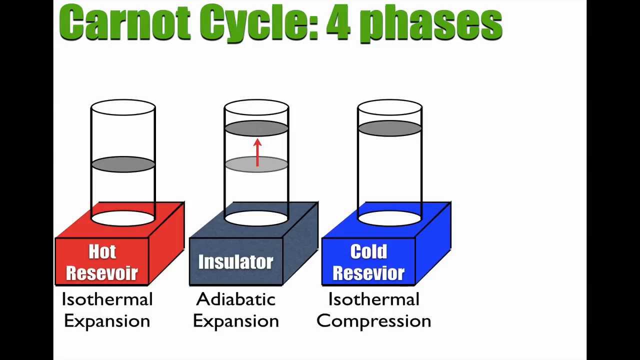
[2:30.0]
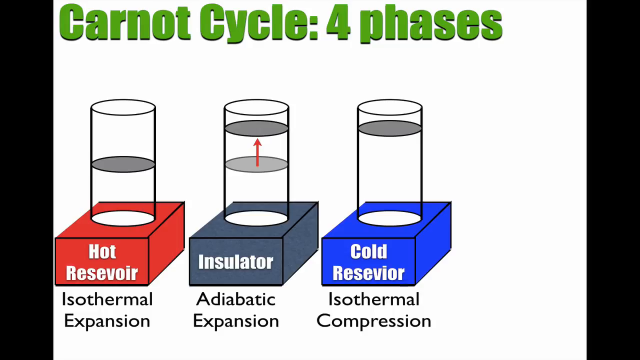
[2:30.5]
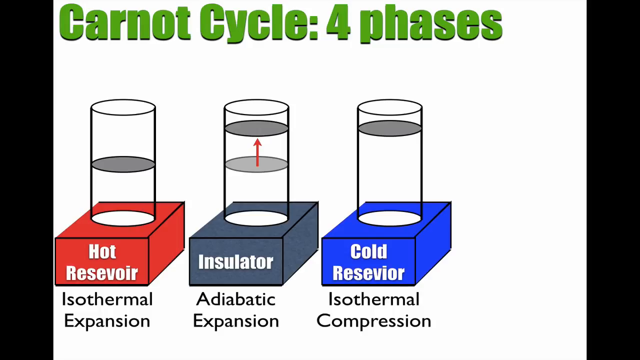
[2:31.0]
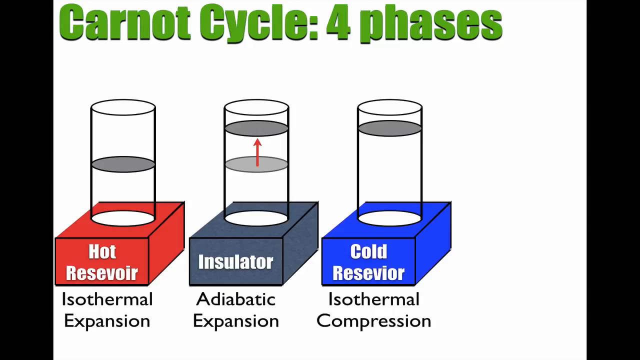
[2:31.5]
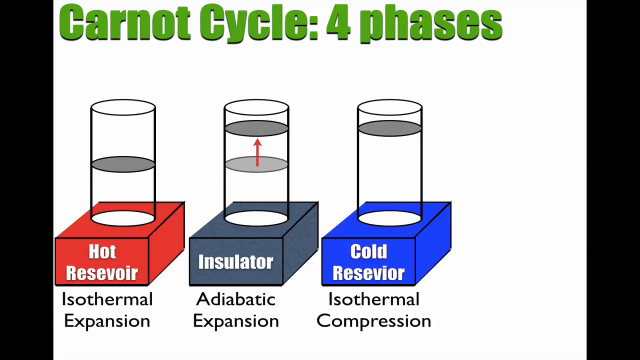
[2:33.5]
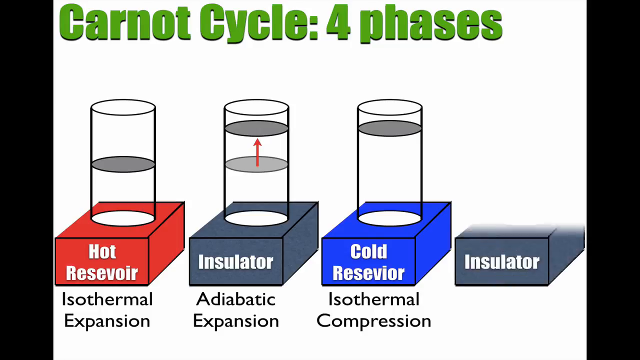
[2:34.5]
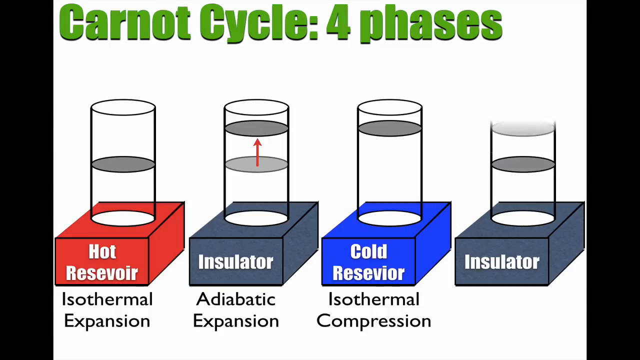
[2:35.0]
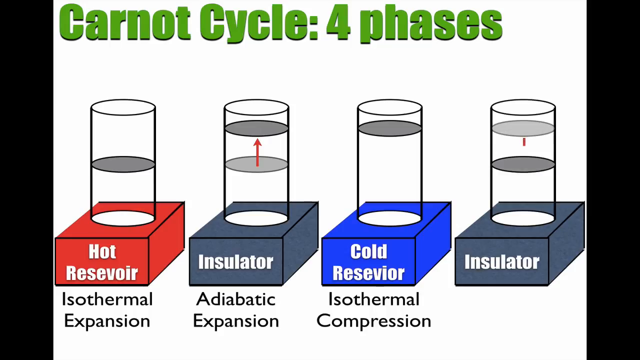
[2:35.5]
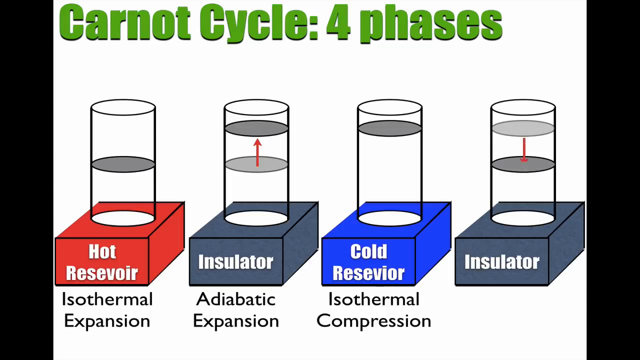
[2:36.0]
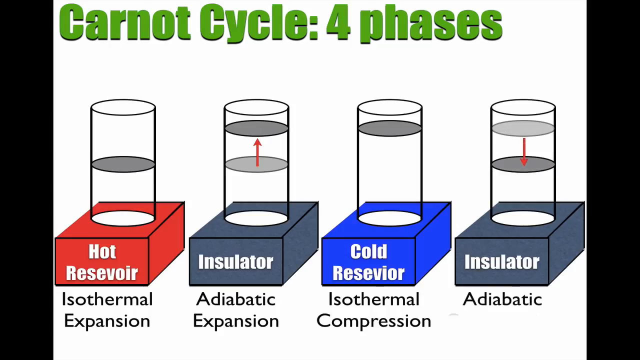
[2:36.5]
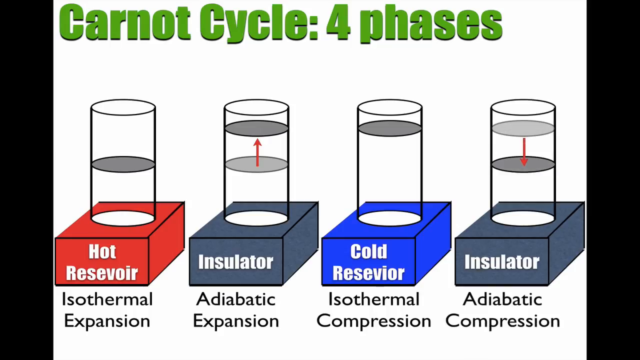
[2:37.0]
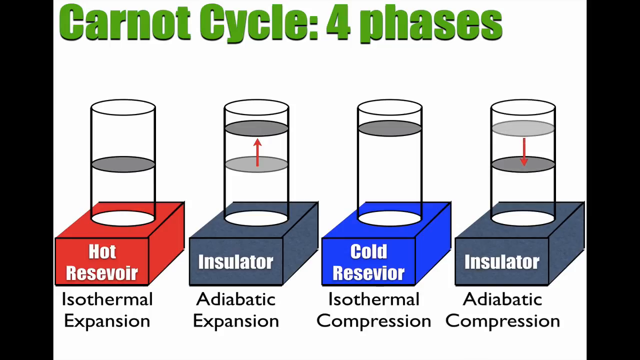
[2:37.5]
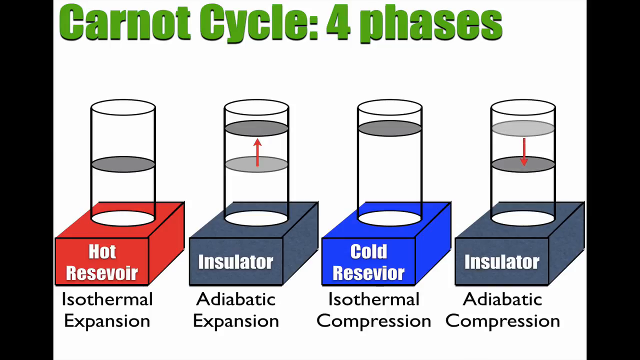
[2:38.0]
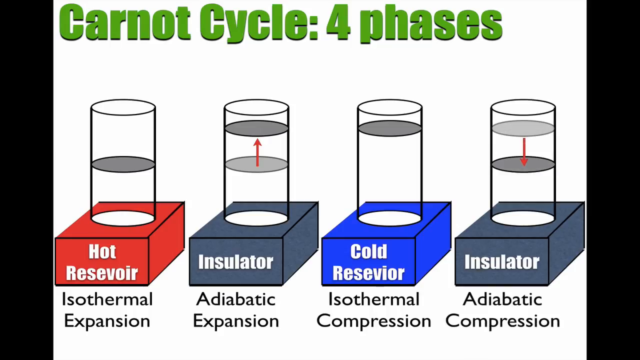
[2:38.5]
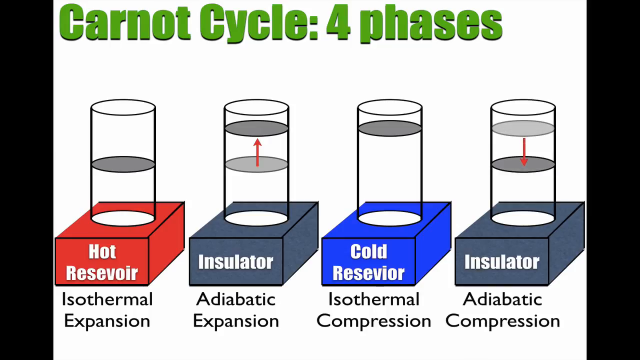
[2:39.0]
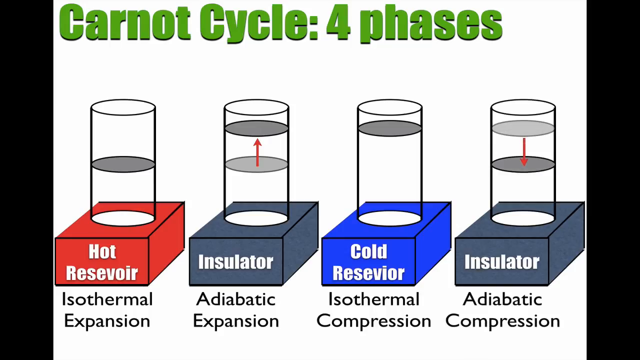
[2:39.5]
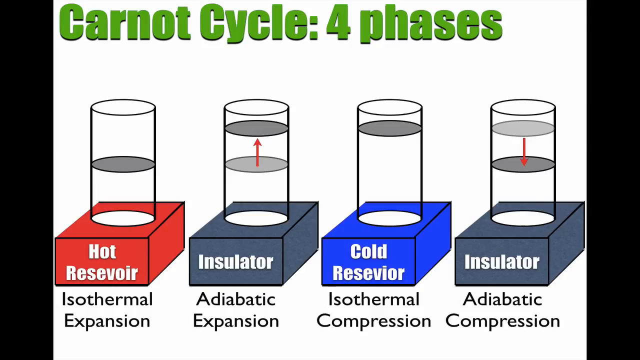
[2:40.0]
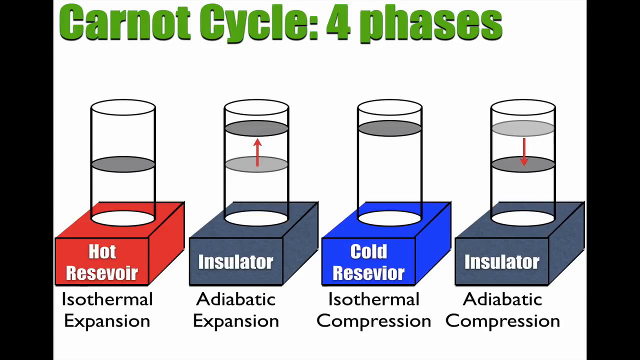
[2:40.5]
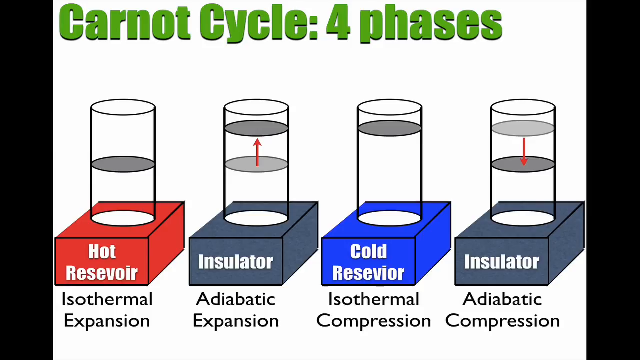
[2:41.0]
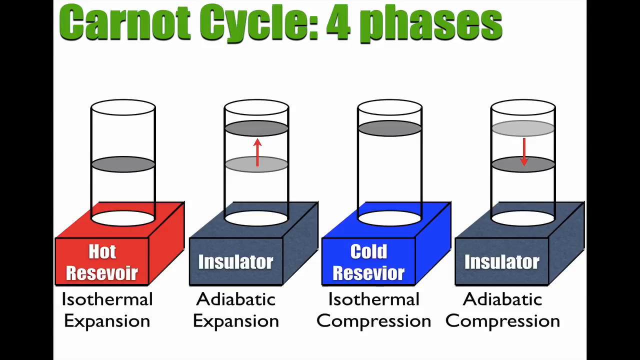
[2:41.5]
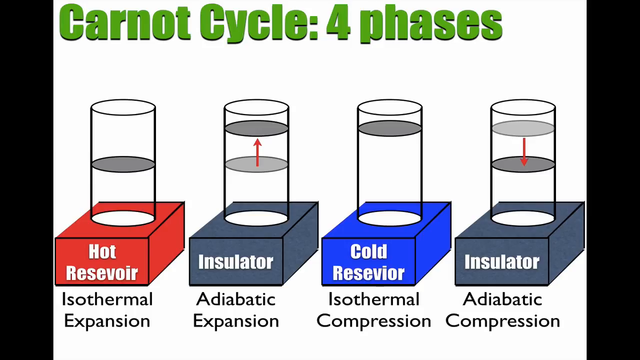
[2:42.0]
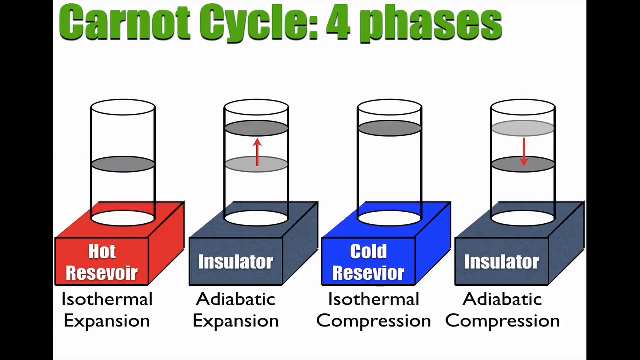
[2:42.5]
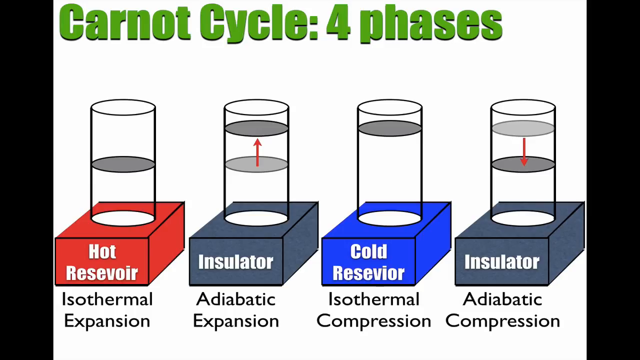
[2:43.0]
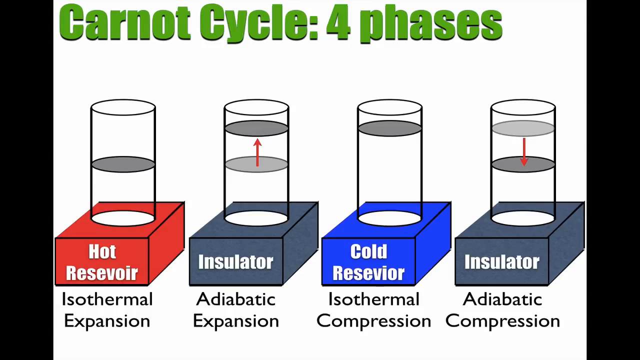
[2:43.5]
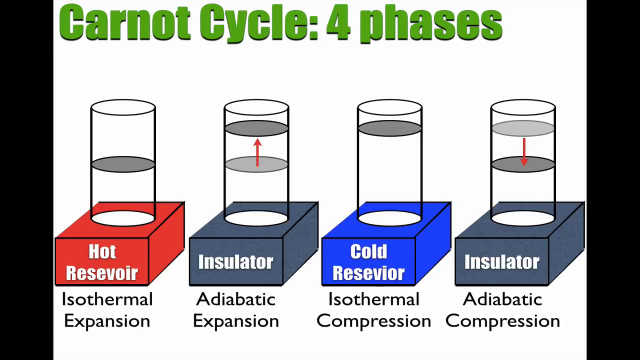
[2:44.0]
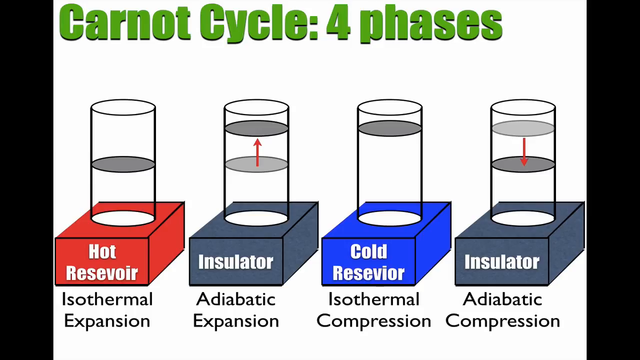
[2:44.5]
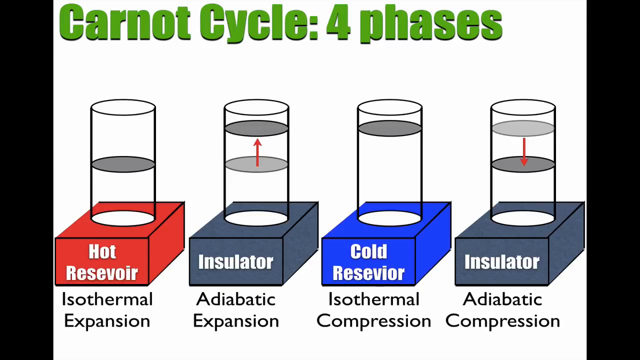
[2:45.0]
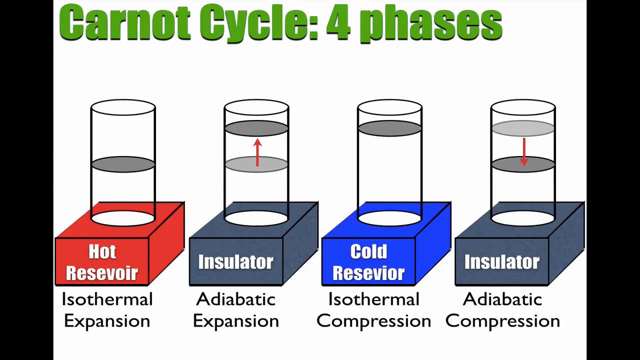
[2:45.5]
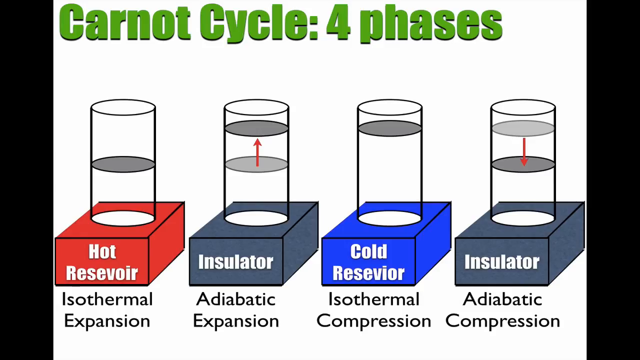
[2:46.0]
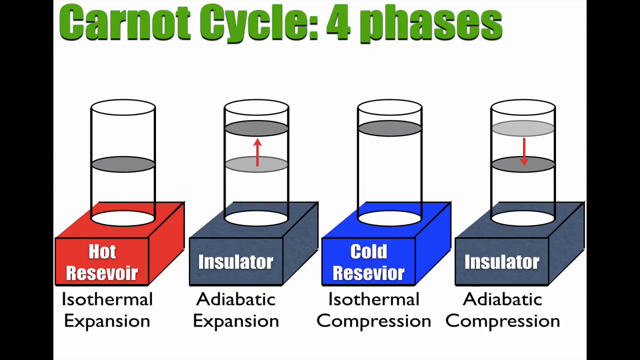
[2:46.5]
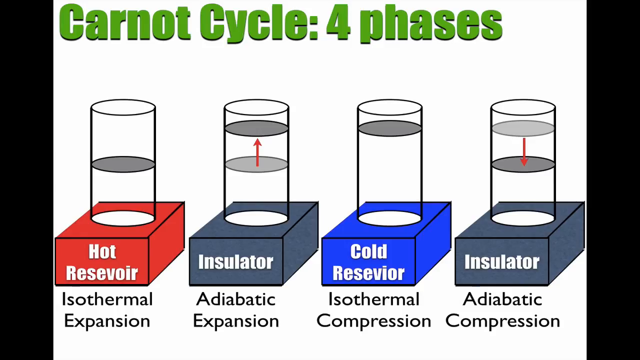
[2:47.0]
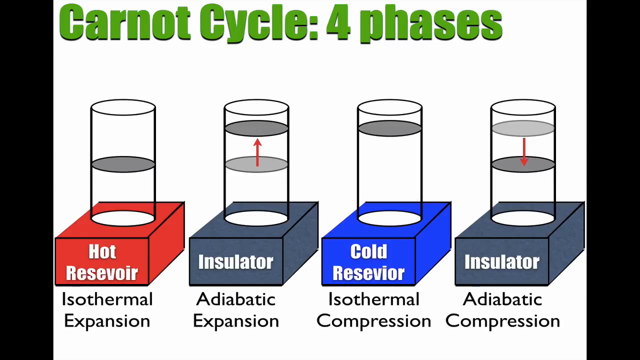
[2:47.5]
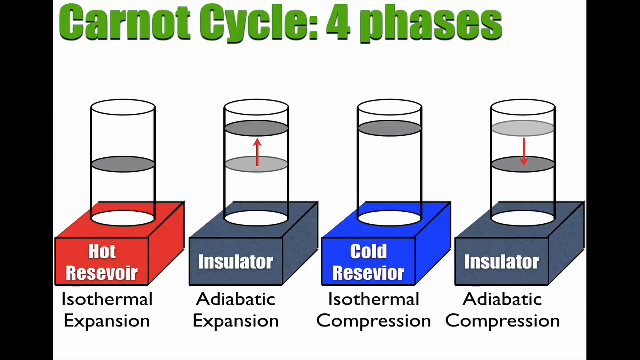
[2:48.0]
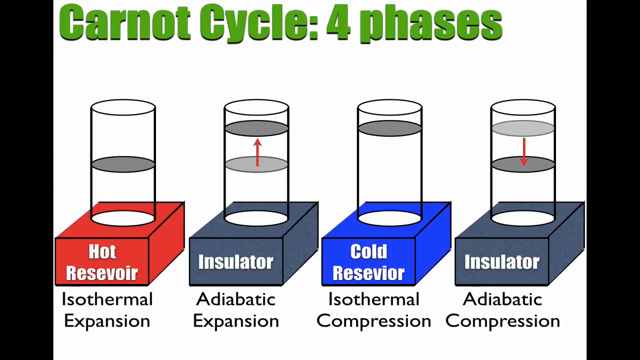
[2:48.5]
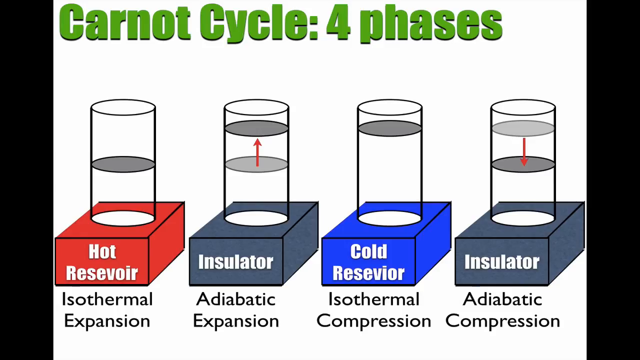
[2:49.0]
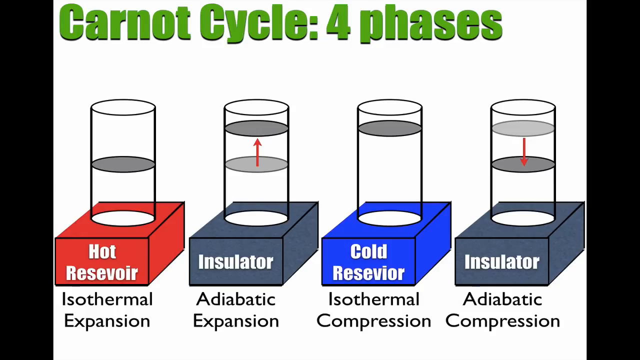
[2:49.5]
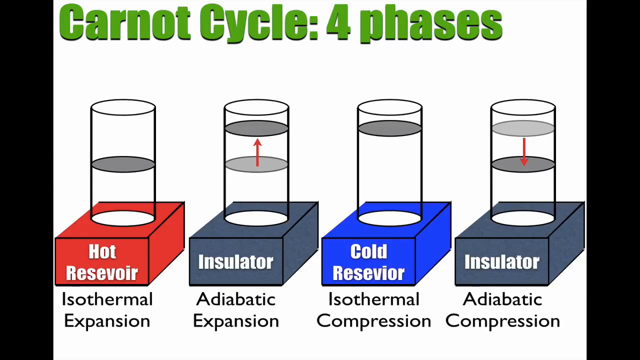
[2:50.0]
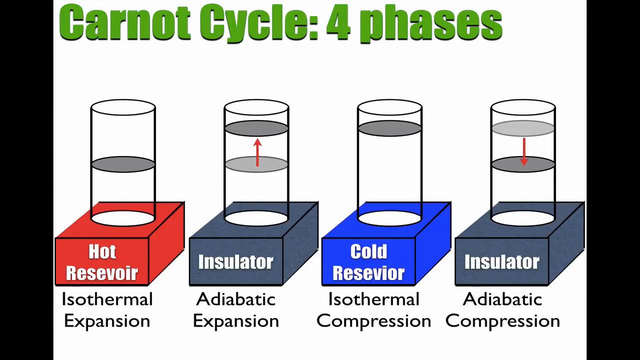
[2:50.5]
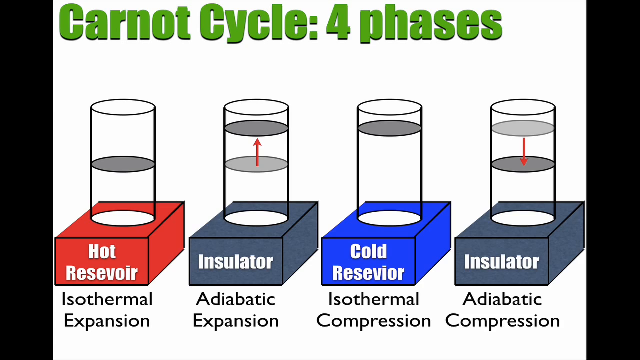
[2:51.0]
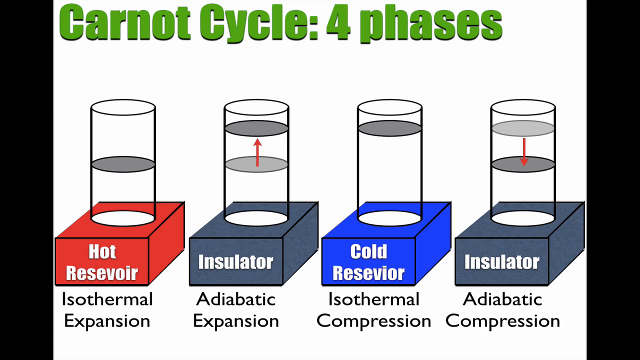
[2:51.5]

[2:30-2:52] The three diagrams of the Carnot cycle are shown, and a fourth phase diagram appears. Its container, similar to the second diagram, has "insulator" on the front and is gray, perhaps slightly lighter, possibly a slightly different shade from the other insulator; the hot reservoir is red and the cold reservoir blue. Above the container is a circle, a gray circle halfway up, a lighter gray circle near the top, and a circle at the top. Between the two shades of gray is a red line, at first with no arrow; the end of the line then extends downwards and a red arrowhead appears in the bottom gray circle. The four stages of the Carnot cycle are now displayed on one sheet.